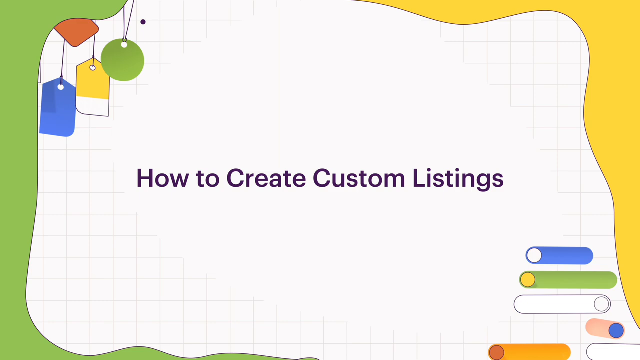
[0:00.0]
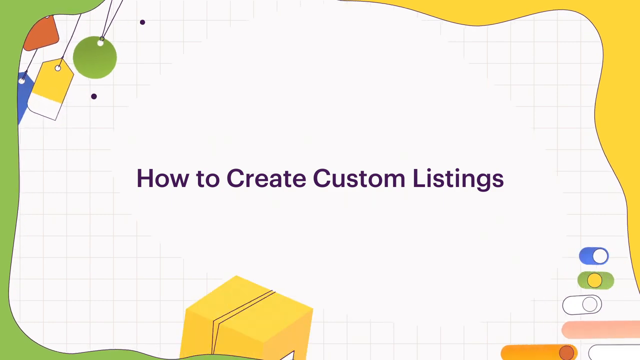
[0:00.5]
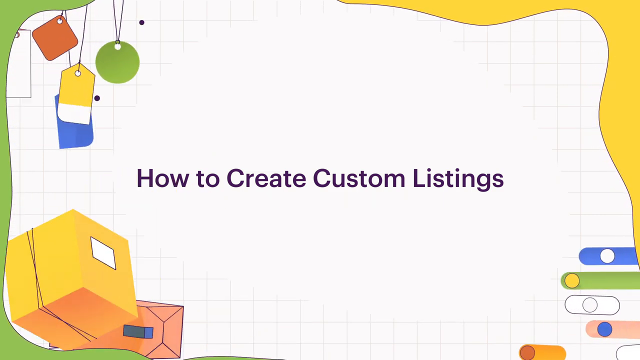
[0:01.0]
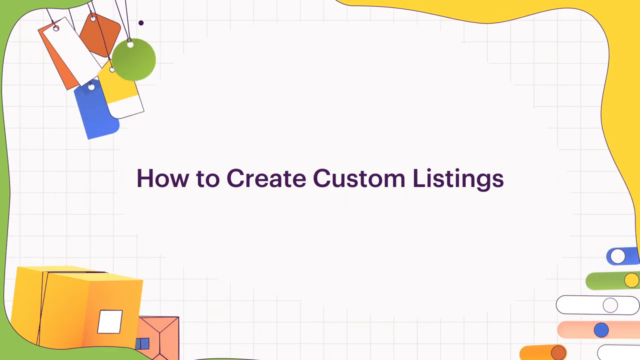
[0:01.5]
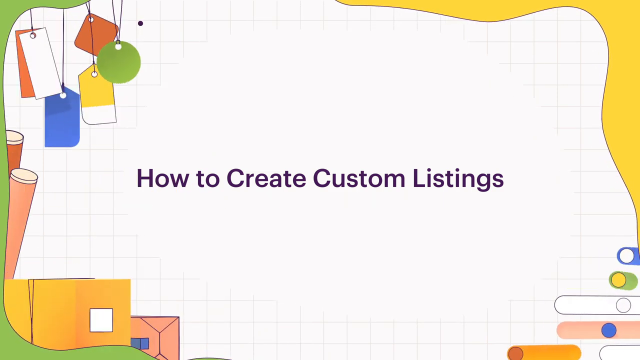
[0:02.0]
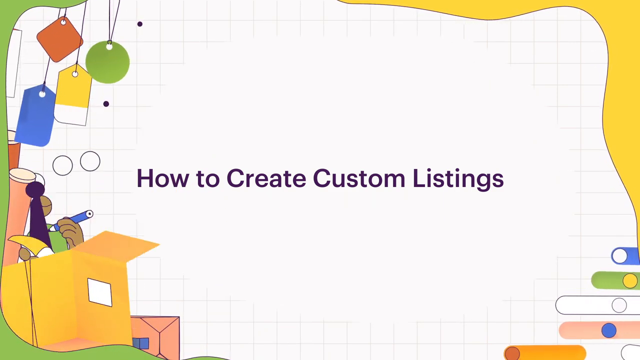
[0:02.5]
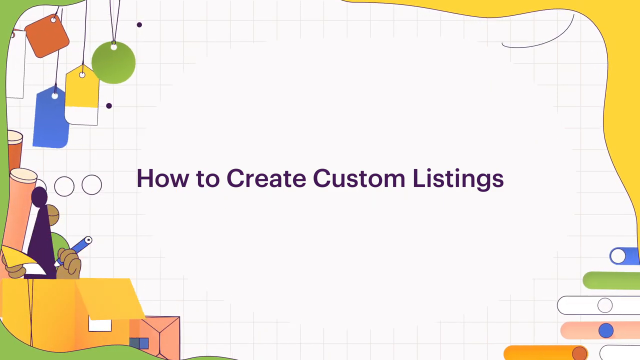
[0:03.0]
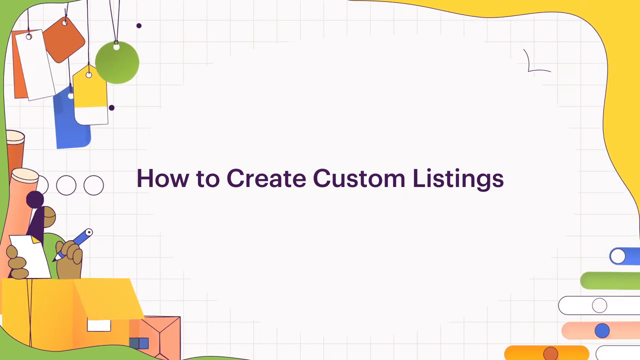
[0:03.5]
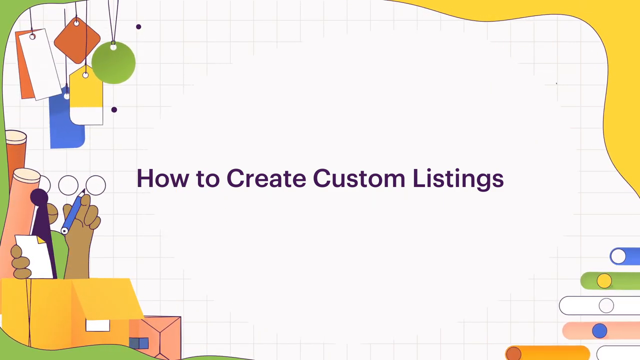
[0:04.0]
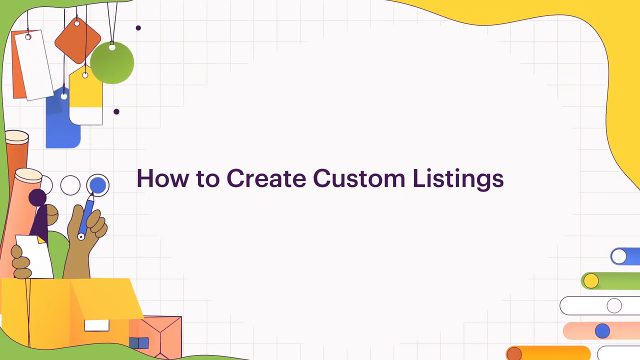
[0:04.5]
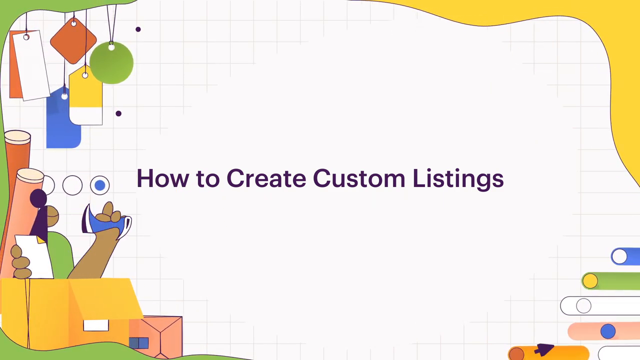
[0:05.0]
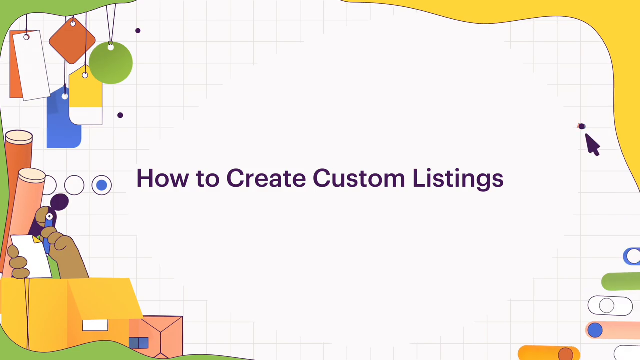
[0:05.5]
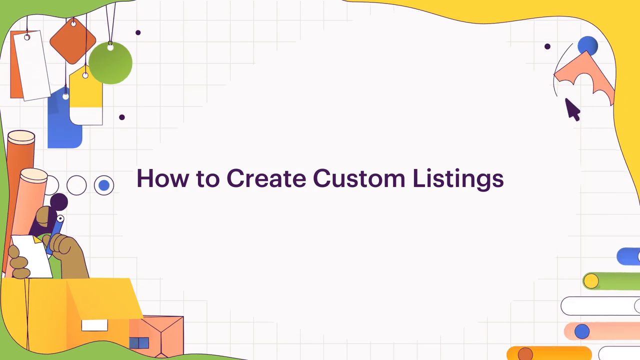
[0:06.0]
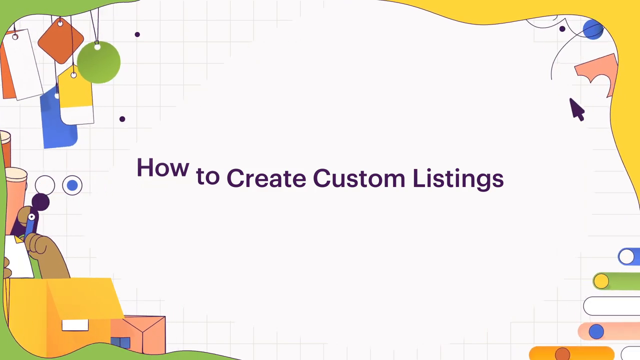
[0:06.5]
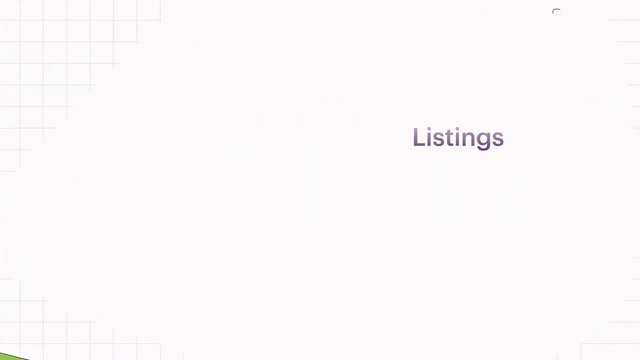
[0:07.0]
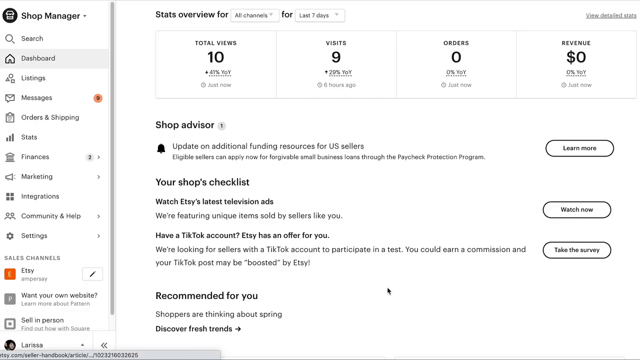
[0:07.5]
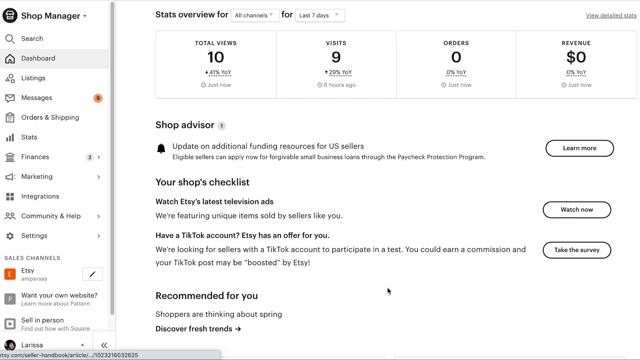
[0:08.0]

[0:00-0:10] The video opens with text about how to create custom listings, beginning "how to create custom", along with some drawings. Next comes a page that appears to be a guide to the process, with a shop manager, a search button, a dashboard, totals of views, visits and orders, and a checklist of them. The video then shows how to create custom listings and goes back to the page showing the views, visits and orders.